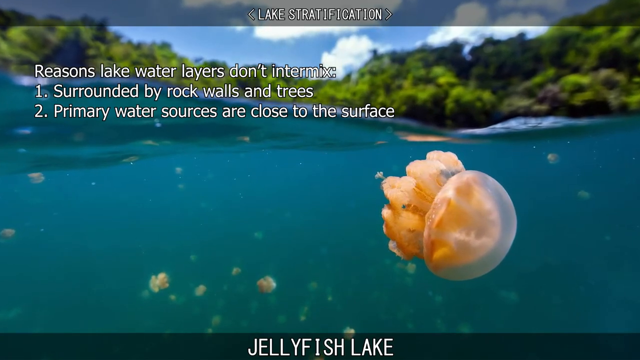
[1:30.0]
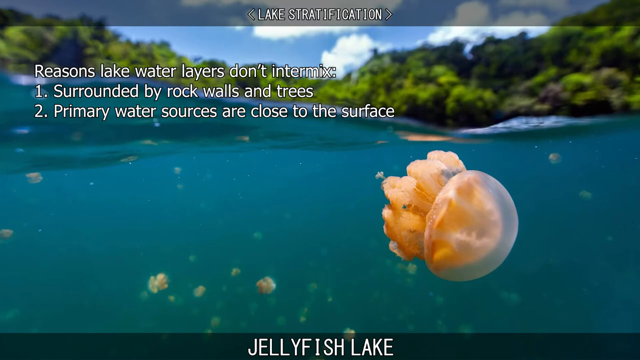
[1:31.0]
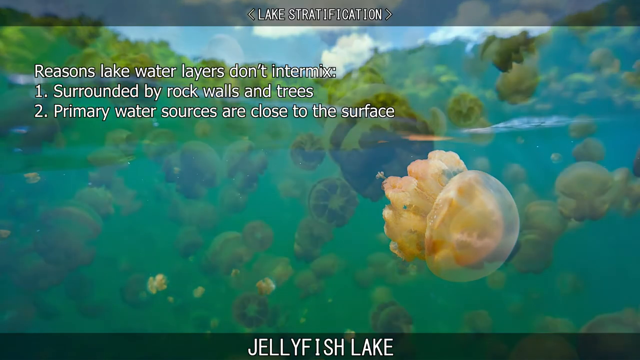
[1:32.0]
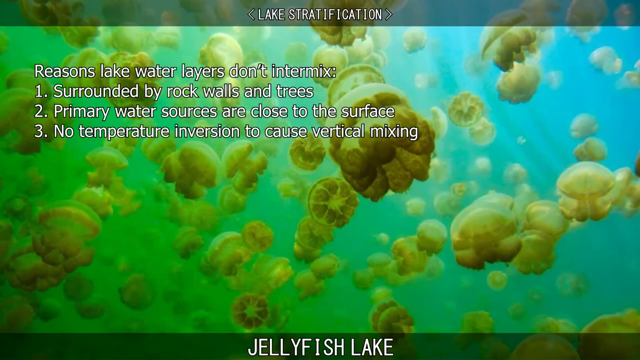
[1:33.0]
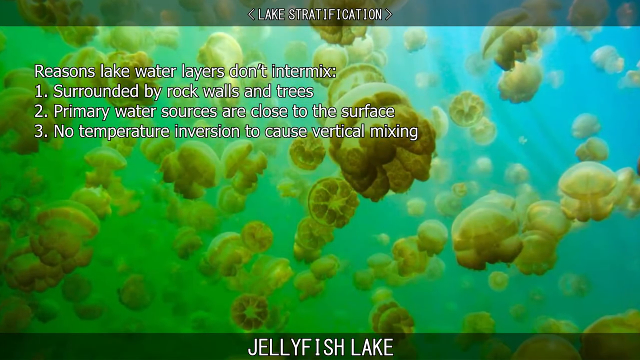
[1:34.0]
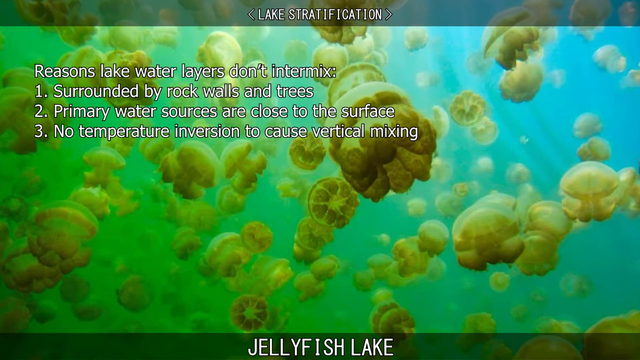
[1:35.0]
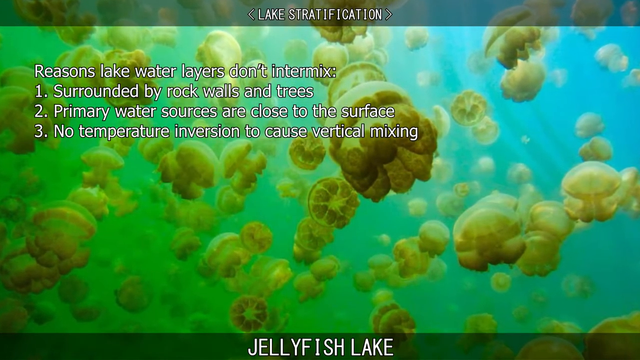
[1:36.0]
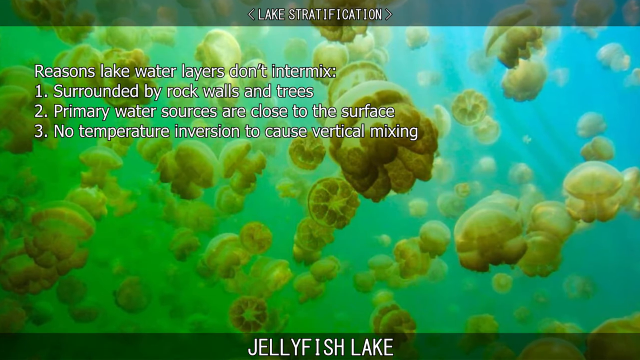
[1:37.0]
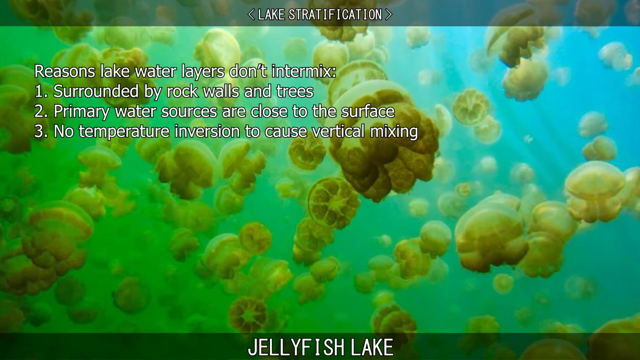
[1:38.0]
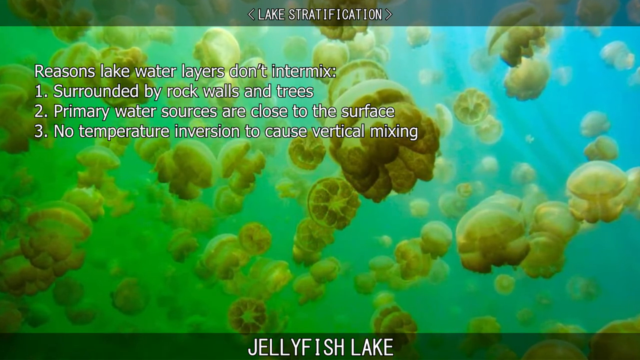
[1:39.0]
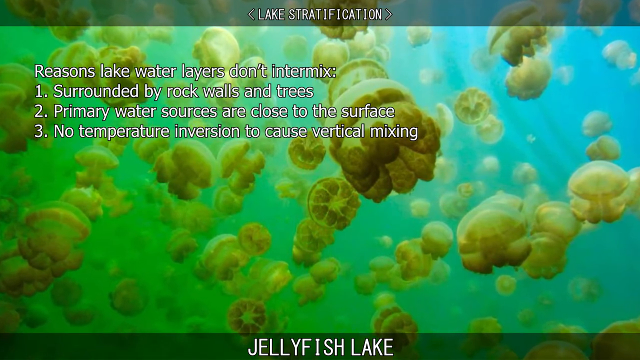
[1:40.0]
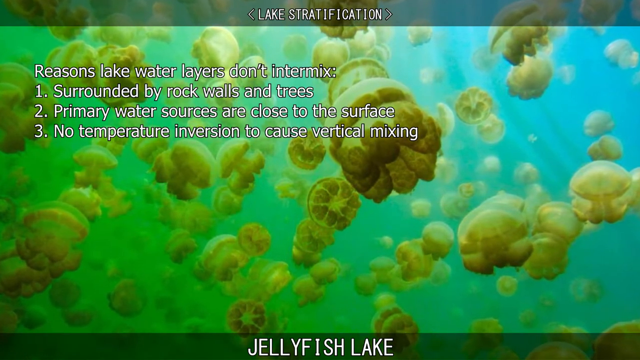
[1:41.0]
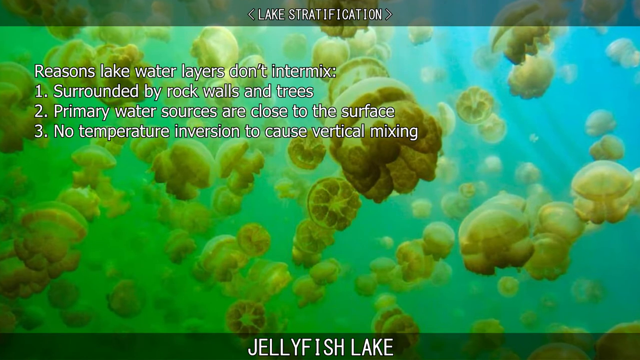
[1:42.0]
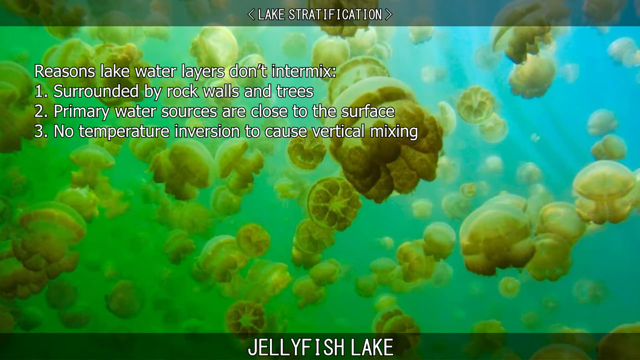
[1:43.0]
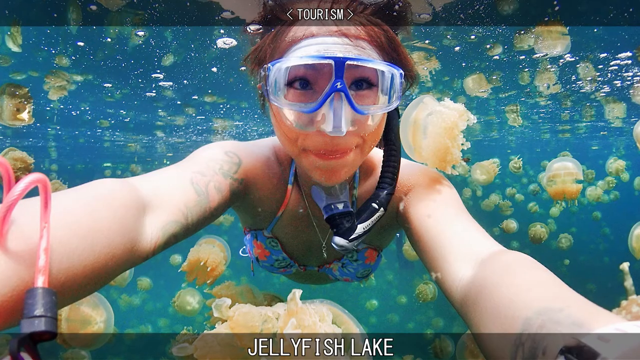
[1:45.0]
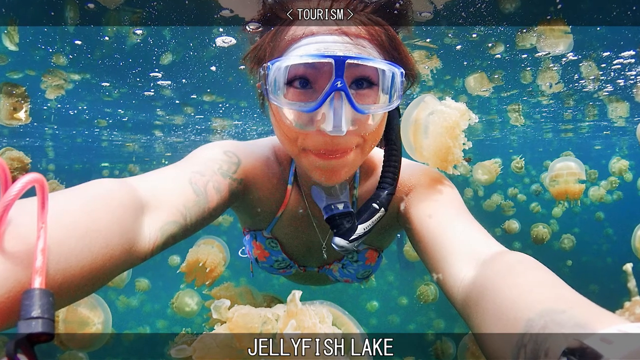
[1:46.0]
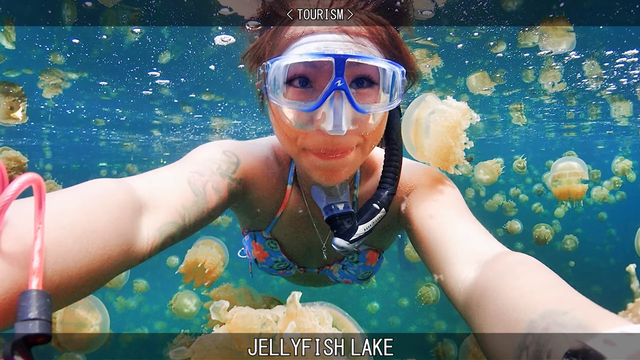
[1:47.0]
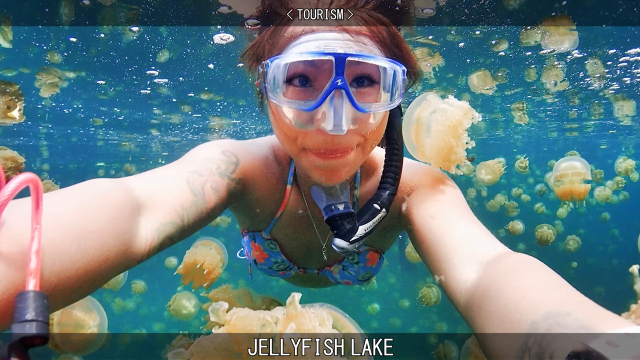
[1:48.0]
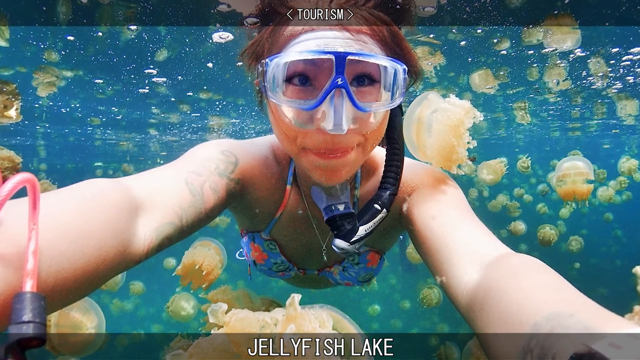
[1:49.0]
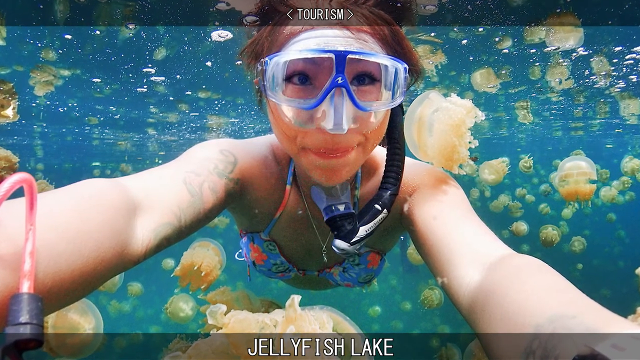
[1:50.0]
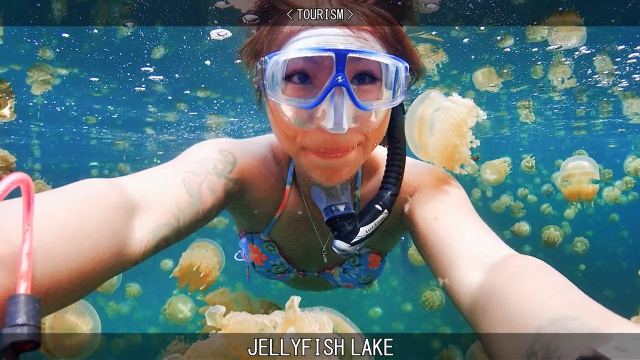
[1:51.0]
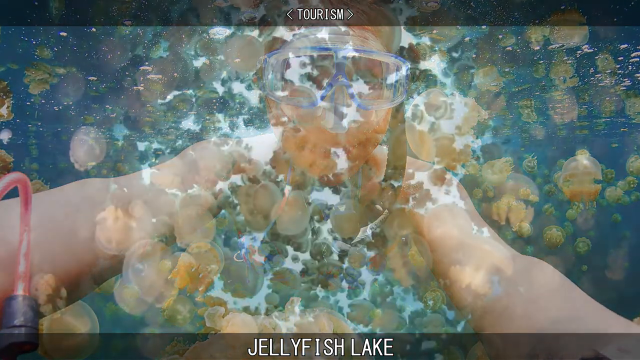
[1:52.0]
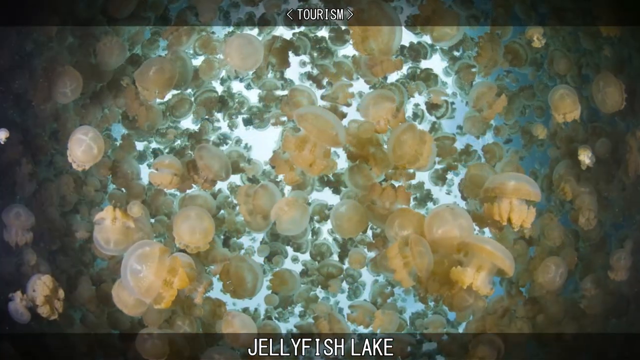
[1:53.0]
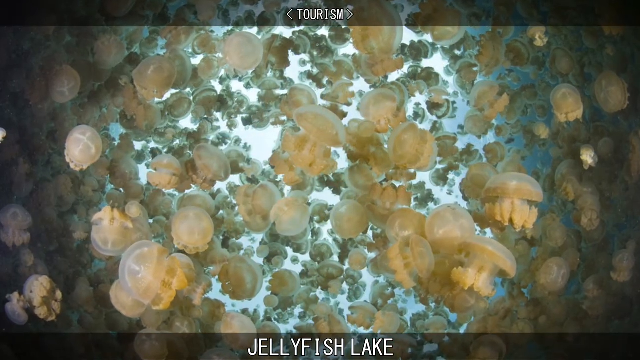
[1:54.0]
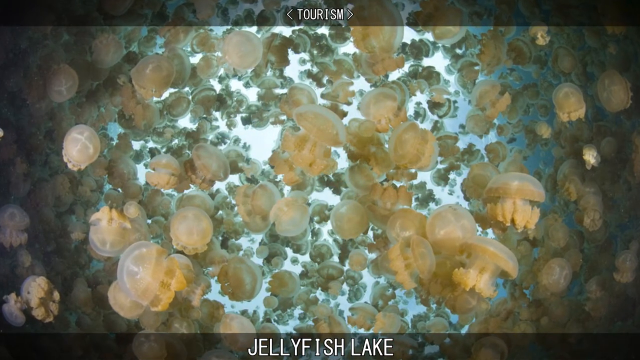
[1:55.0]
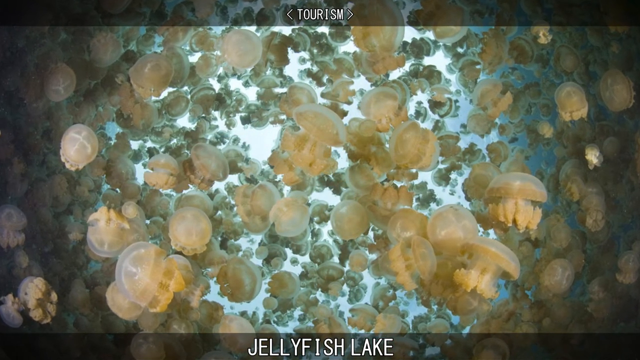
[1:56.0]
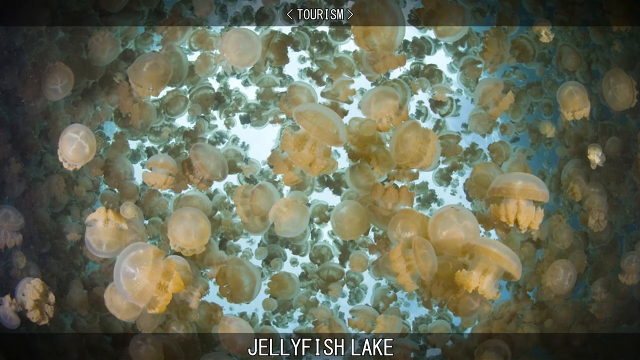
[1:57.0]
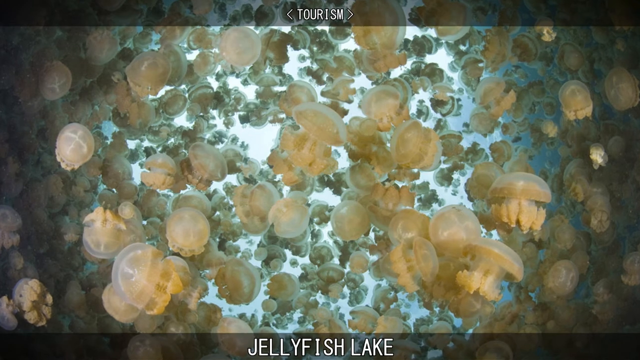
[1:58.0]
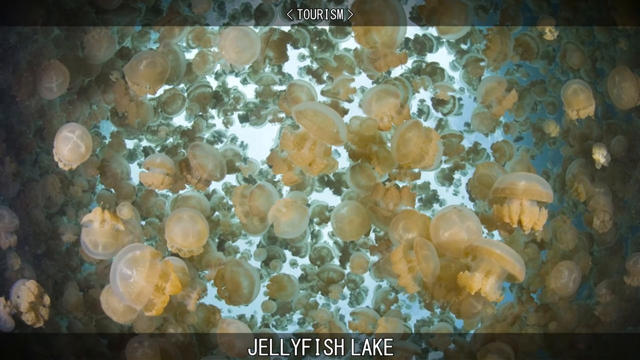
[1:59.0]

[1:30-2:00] The video continues on meromictic lakes and why their water layers do not intermix: the water is surrounded by rocks and trees, its water sources are close to the surface, and there is no temperature inversion causing vertical mixing. It then indicates that humans can go into the lake and be among the jellyfish.